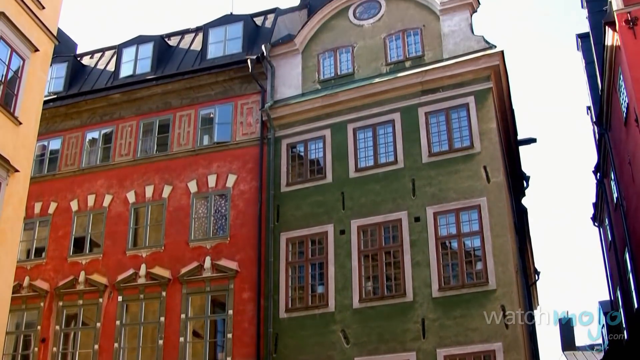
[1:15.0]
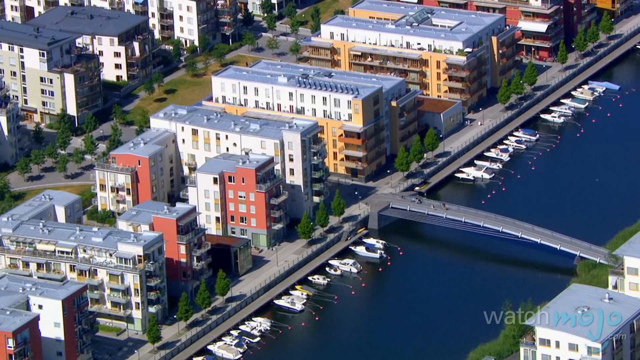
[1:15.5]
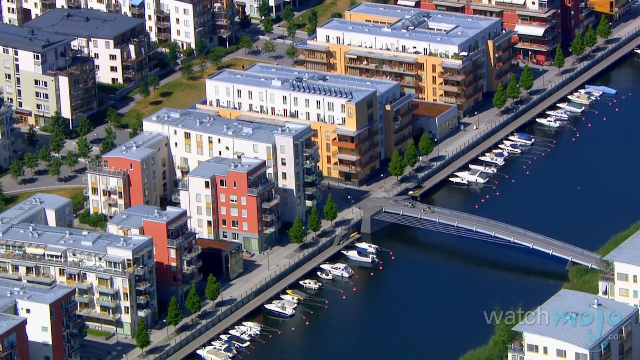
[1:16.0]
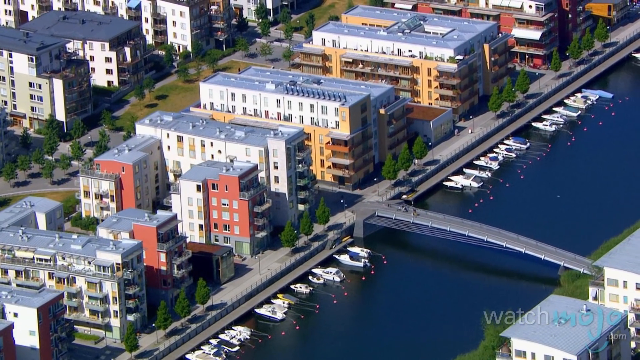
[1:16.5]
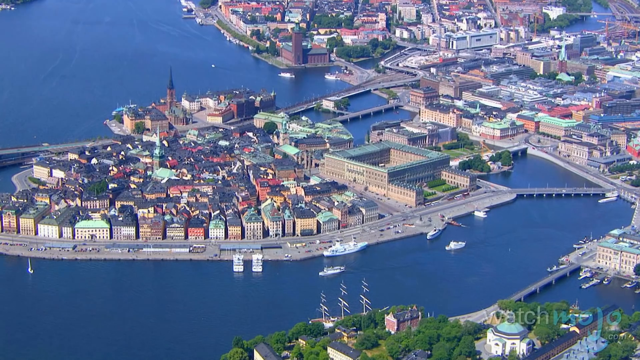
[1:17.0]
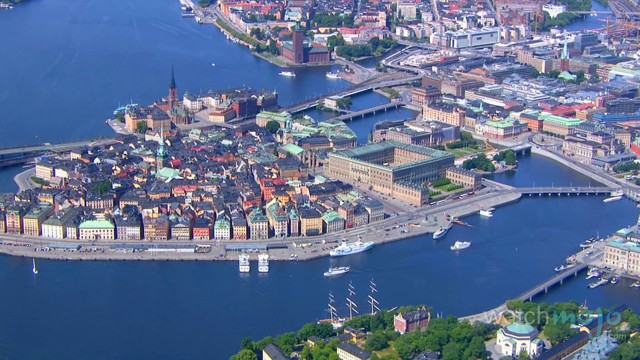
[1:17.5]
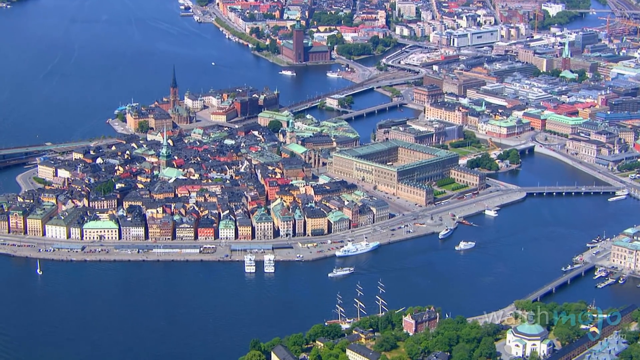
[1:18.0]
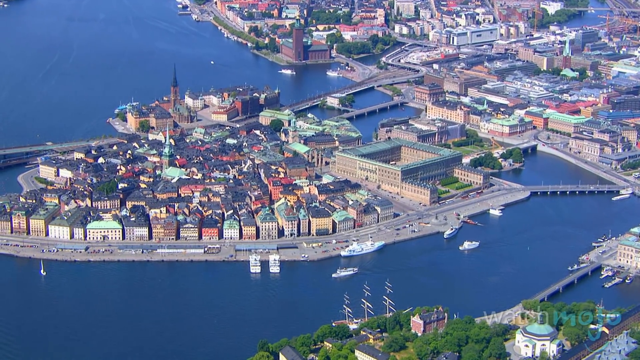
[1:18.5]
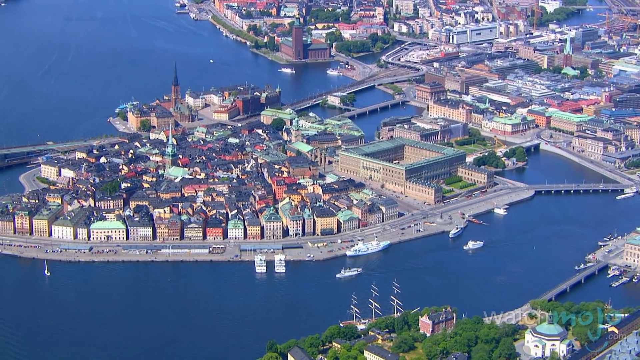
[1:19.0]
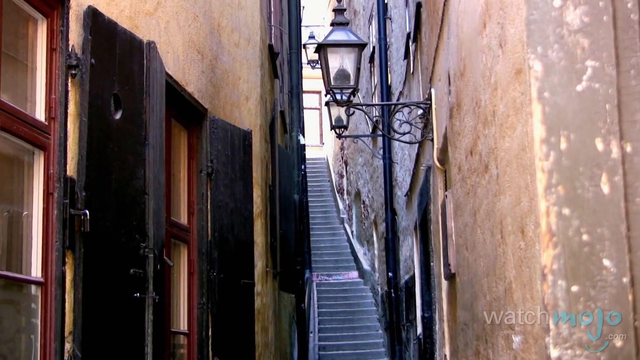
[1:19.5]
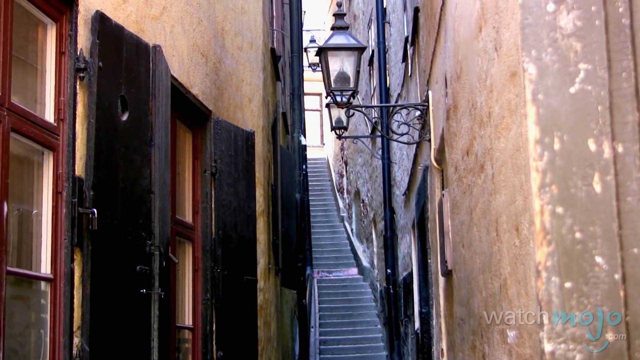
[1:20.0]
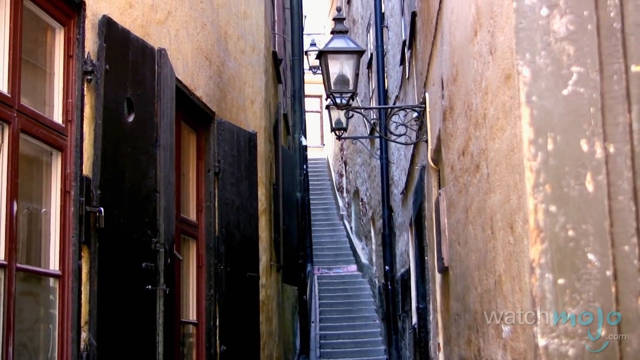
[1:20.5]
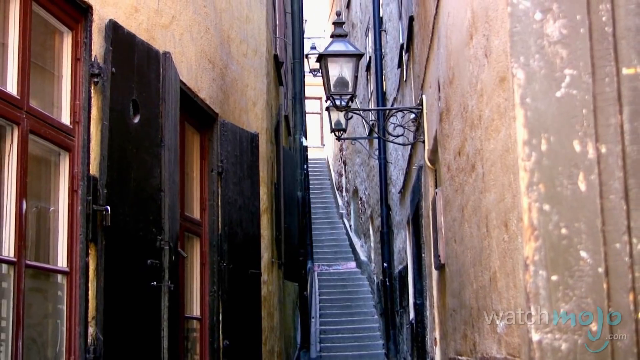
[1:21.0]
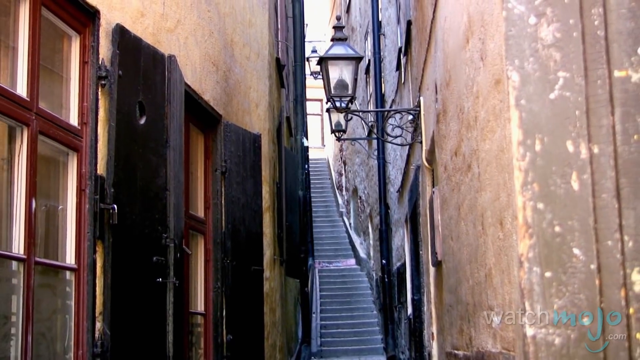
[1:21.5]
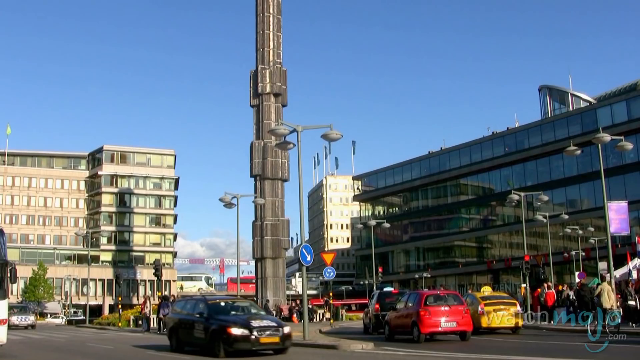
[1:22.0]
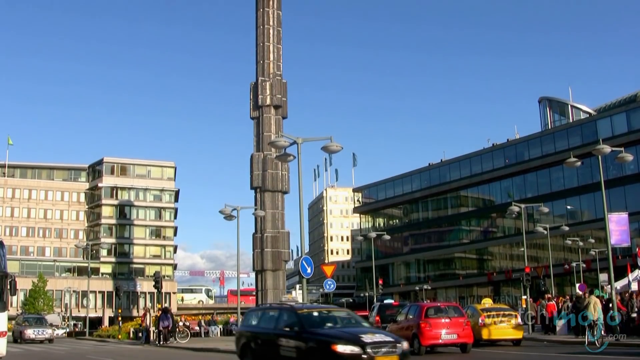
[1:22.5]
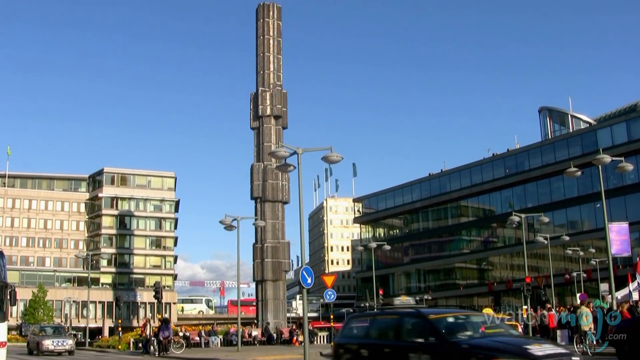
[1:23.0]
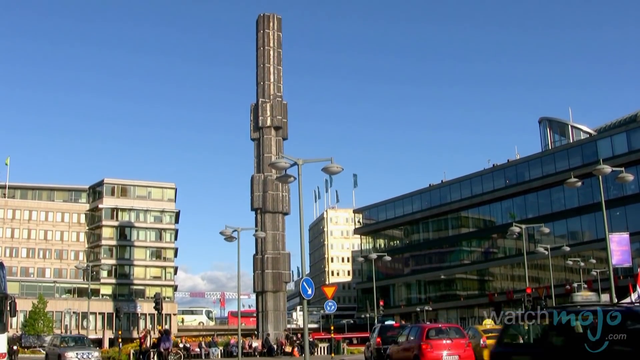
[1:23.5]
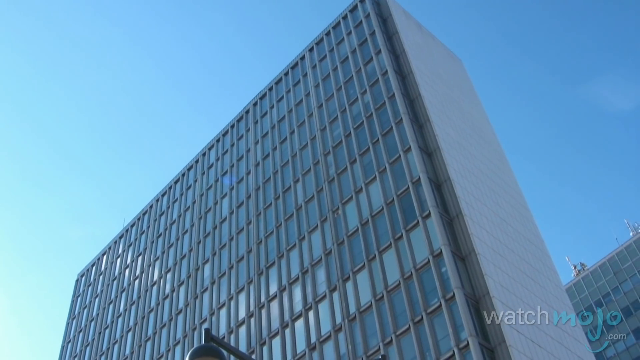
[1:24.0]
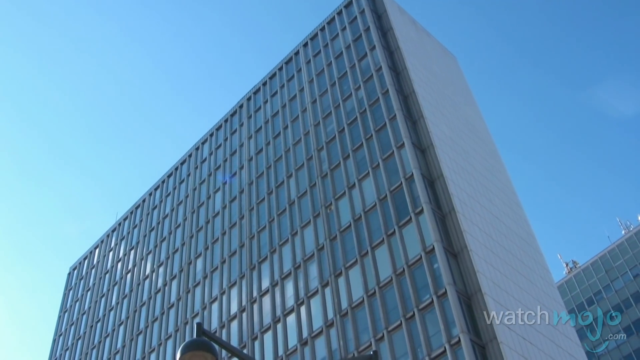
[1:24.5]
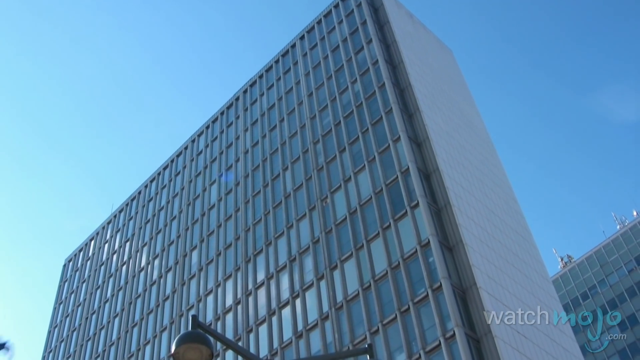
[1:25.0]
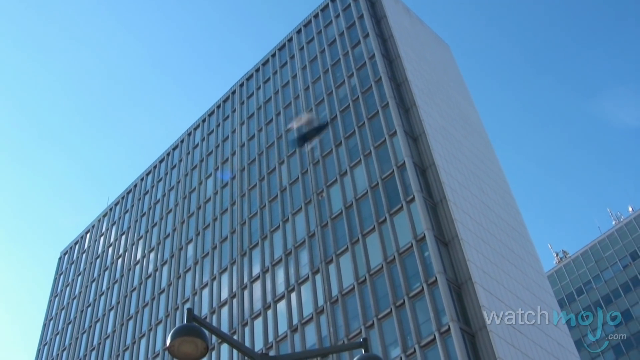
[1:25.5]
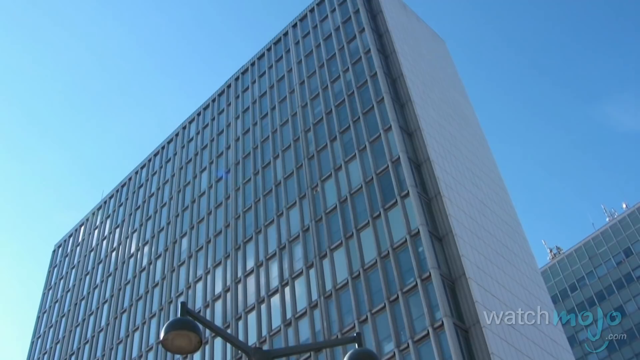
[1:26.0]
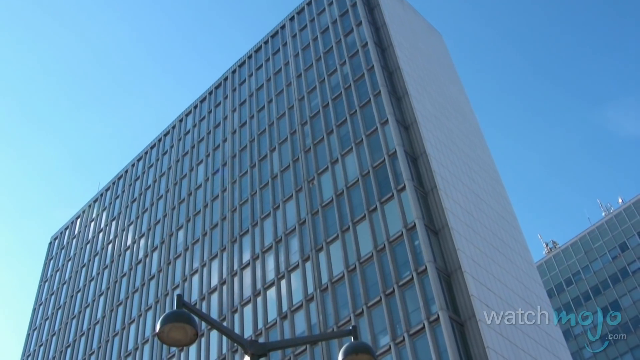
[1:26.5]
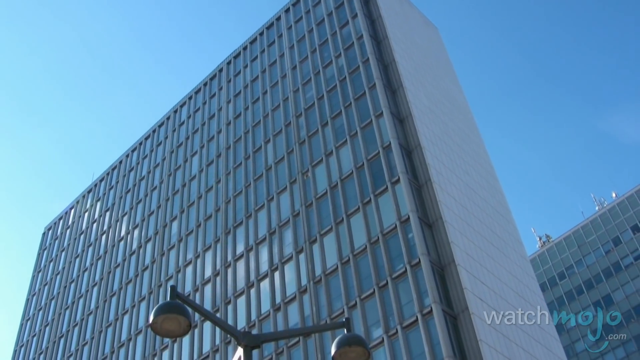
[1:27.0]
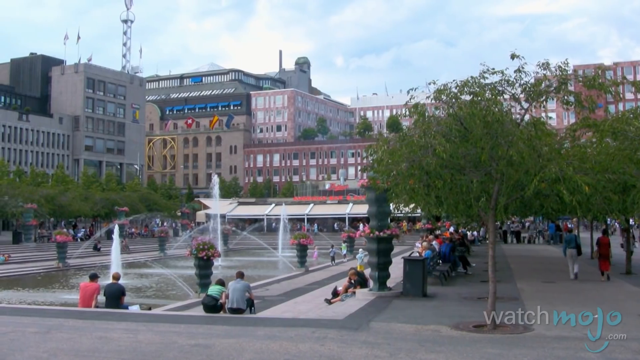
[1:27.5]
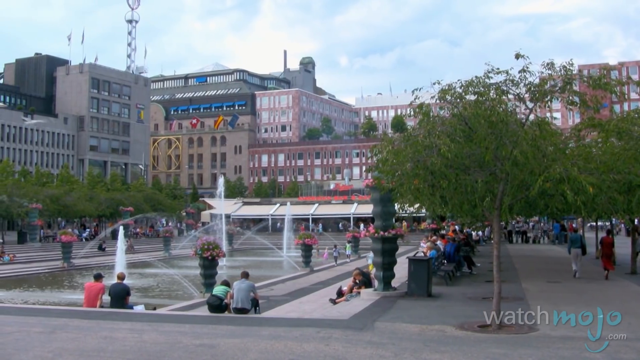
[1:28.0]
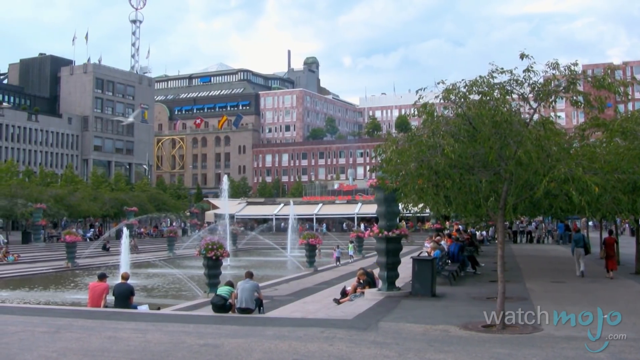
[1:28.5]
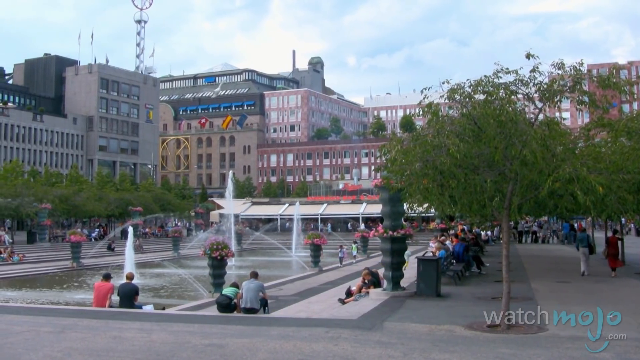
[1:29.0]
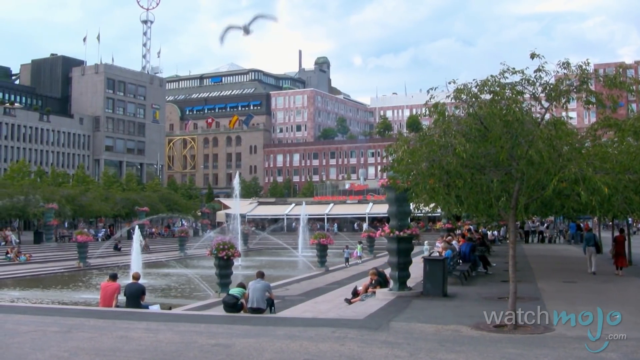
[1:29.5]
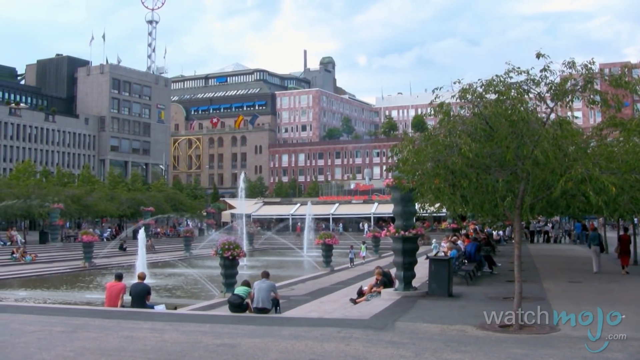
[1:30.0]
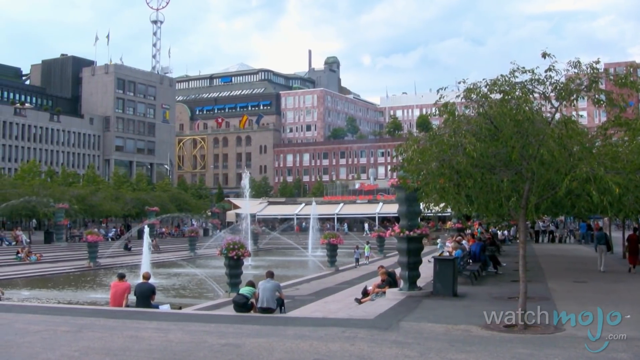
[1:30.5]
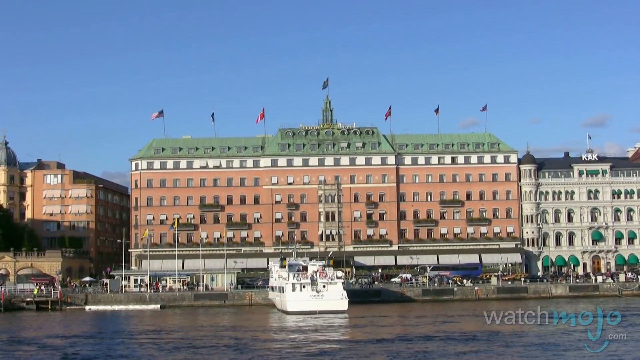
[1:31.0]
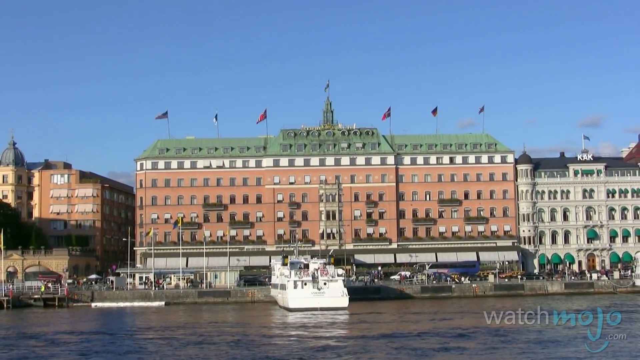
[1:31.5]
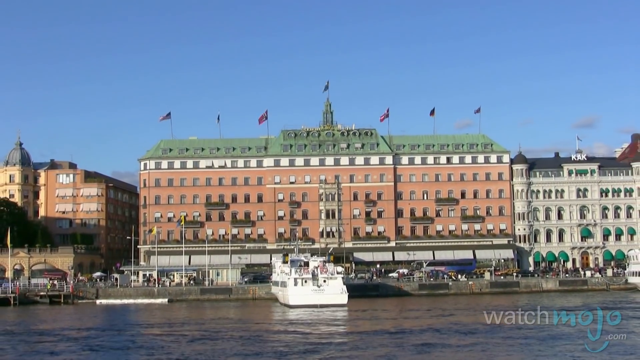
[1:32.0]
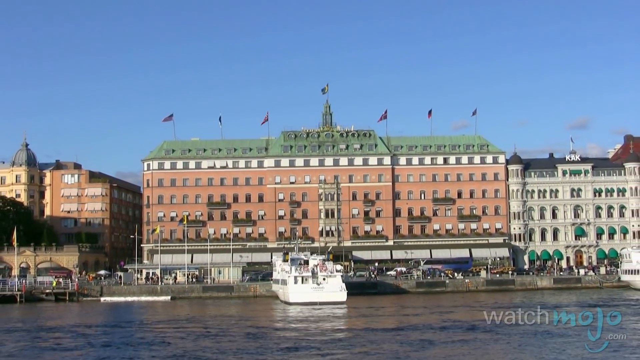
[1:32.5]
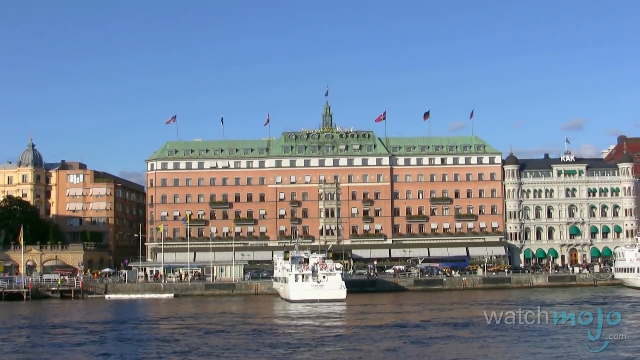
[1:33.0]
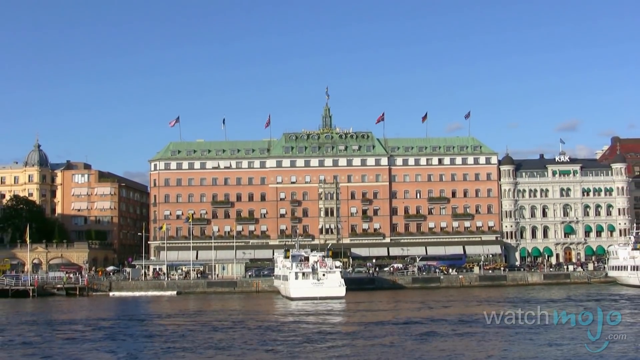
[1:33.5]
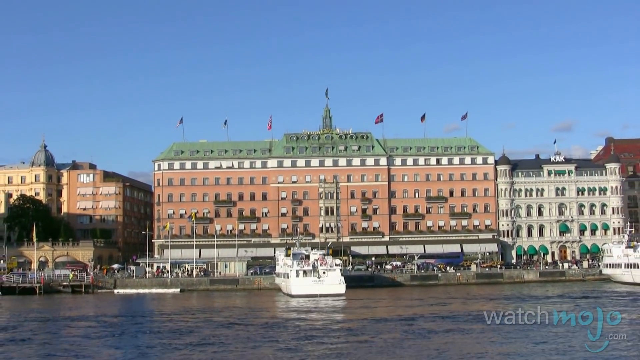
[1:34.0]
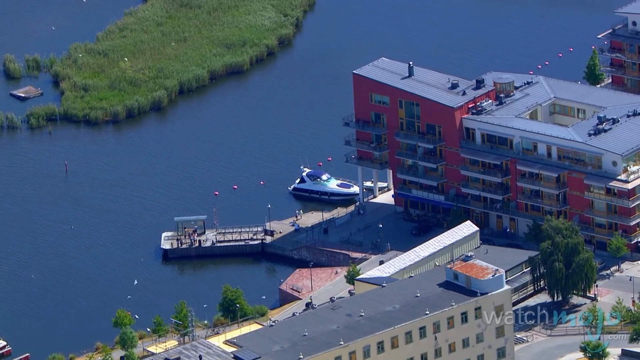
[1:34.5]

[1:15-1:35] Another residential area shows buildings maybe about four feet apart, very close together, with a set of external stairs between them going up a steep incline to the next street behind; the buildings are built into the hill. More downtown buildings follow that may be residential high-rises, maybe condominiums, maybe 10 to 15 floors tall with glass windows. A relatively large water fountain appears, where people sit relaxing and watching the waterfall; what look like couples sit together with their legs hanging off the side of the concrete wall, swinging their legs in the sunshine. What look like swan-type birds fly around the dark blue water that surrounds the city. There are some cars, maybe including a taxi cab, and some cars parked along the way. A red brick building that may be an official government-type building has maybe about four or five flags across the top front and a green top. Down alongside the water, there appear to be homes three to four stories tall where boats can dock.